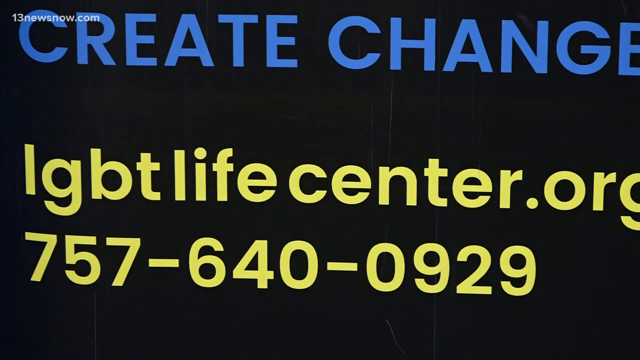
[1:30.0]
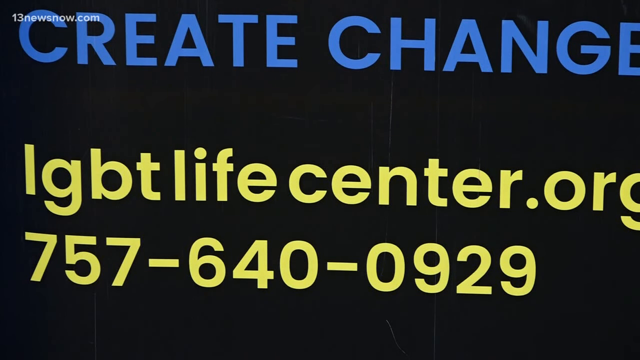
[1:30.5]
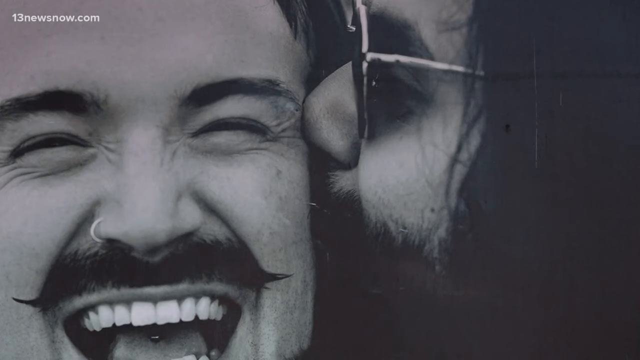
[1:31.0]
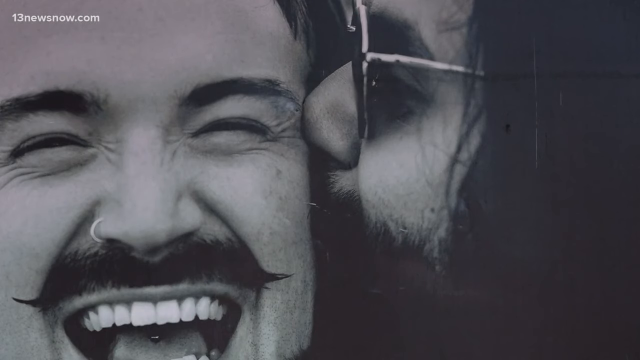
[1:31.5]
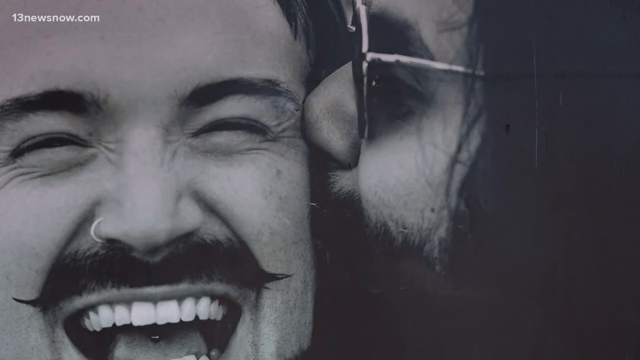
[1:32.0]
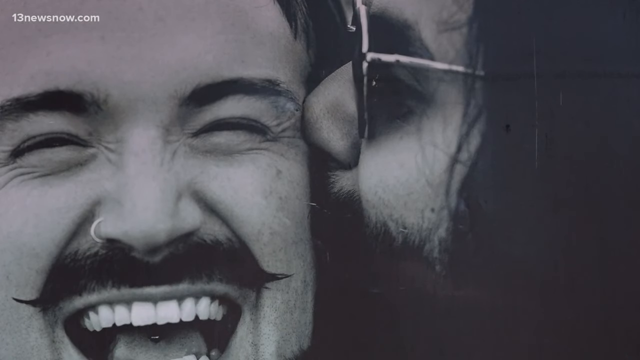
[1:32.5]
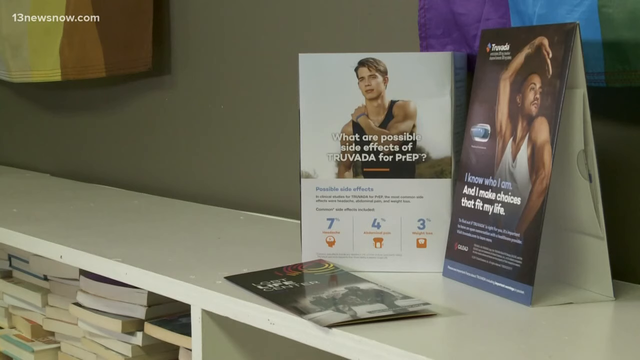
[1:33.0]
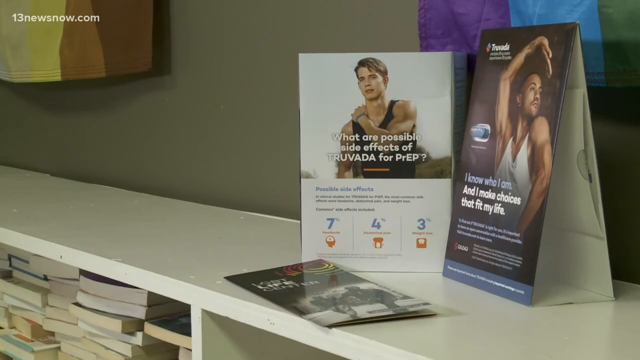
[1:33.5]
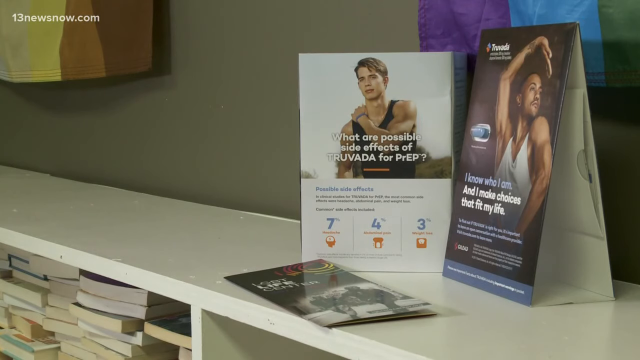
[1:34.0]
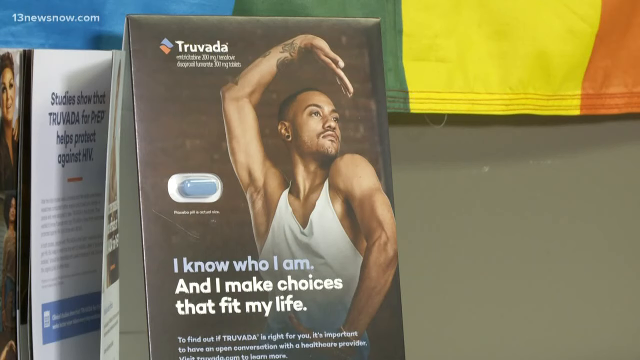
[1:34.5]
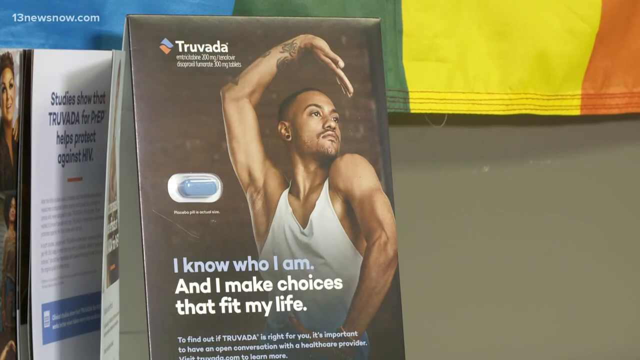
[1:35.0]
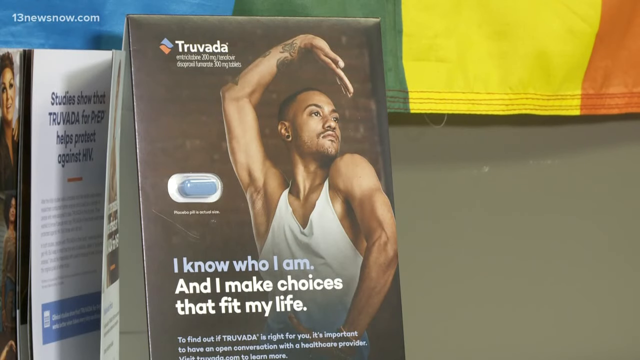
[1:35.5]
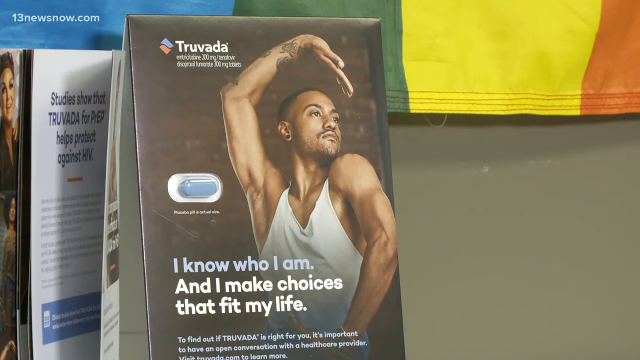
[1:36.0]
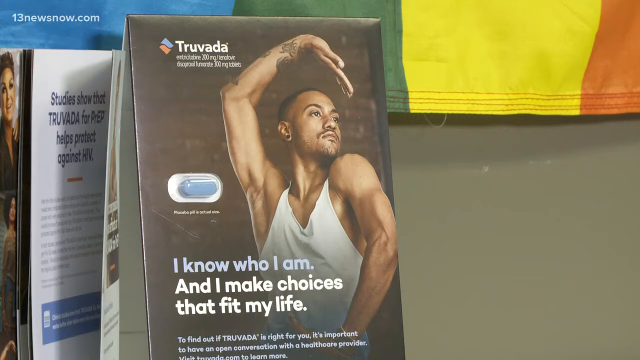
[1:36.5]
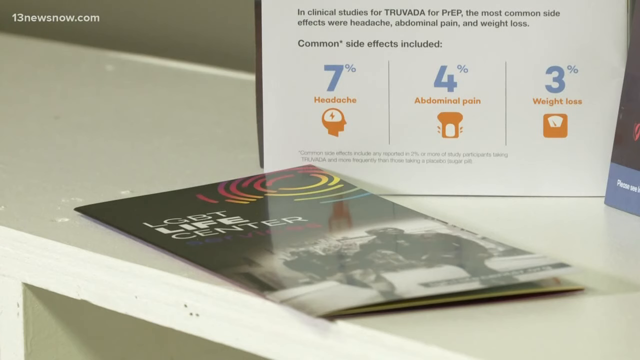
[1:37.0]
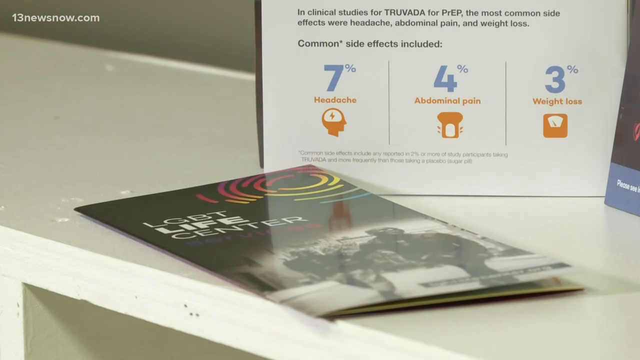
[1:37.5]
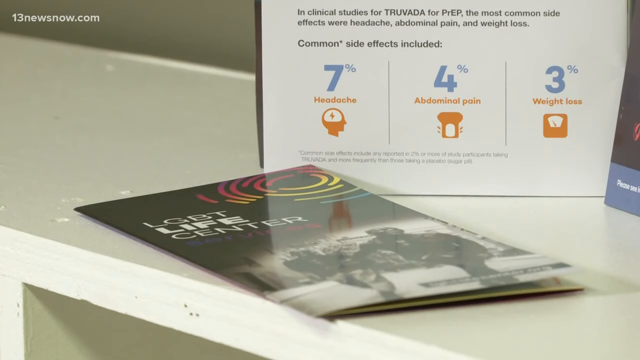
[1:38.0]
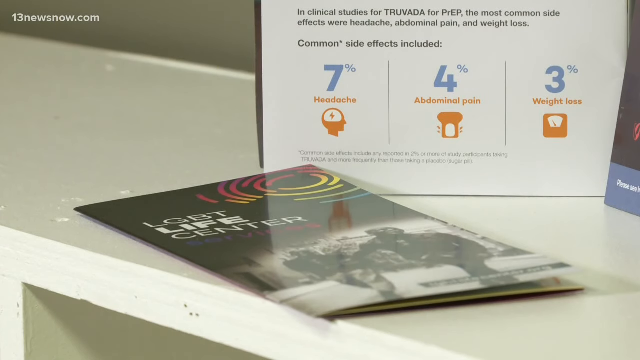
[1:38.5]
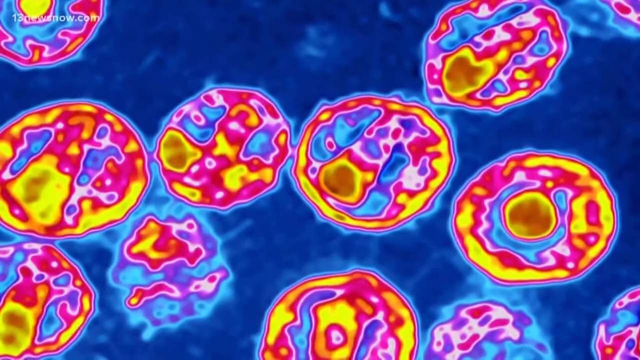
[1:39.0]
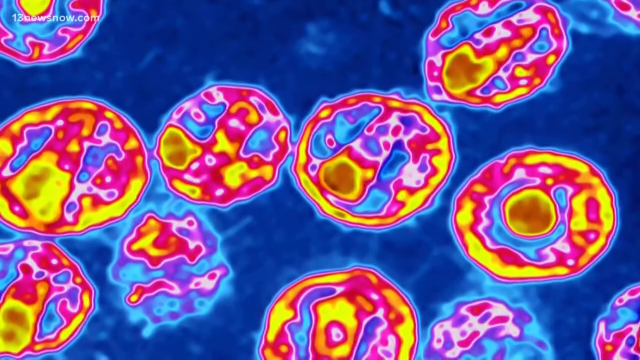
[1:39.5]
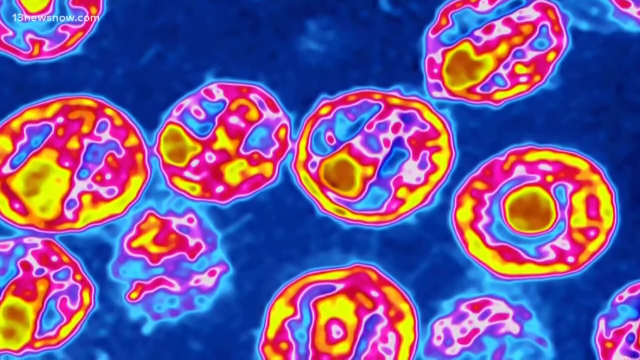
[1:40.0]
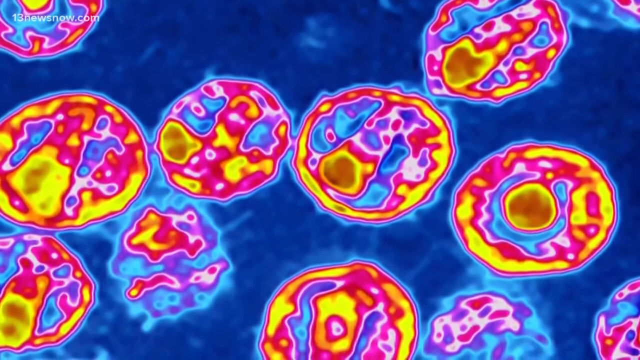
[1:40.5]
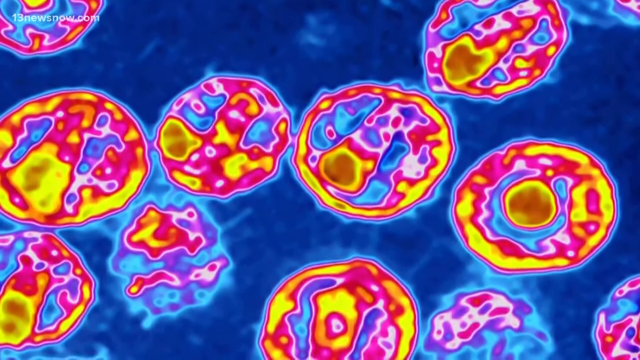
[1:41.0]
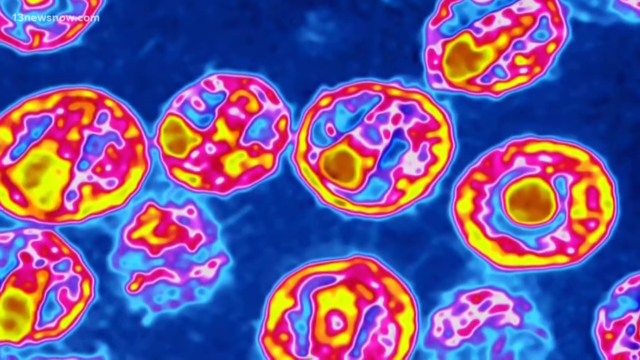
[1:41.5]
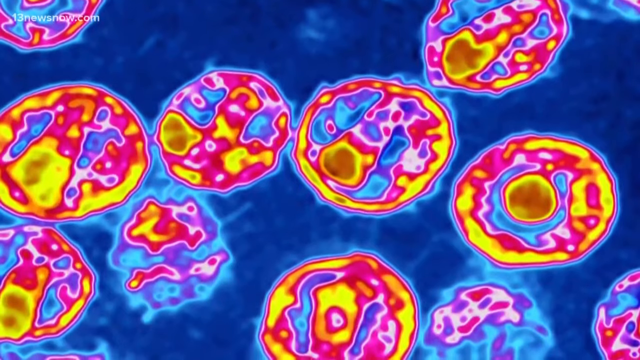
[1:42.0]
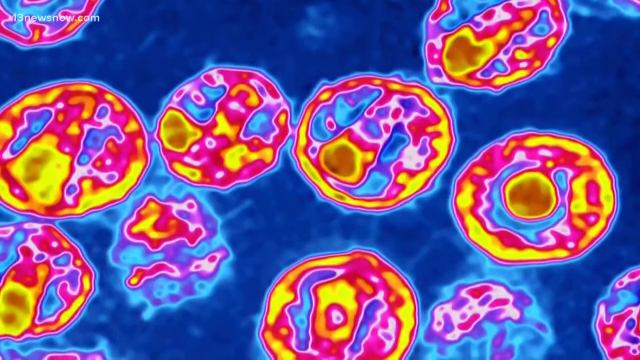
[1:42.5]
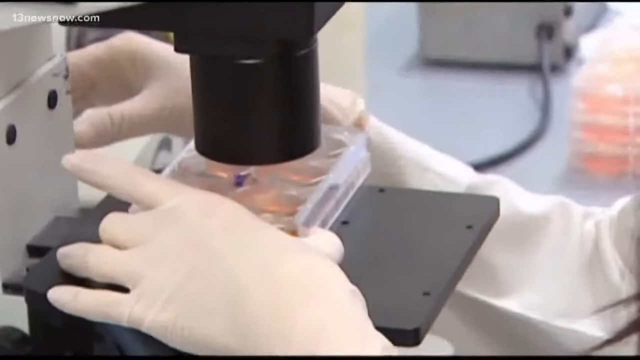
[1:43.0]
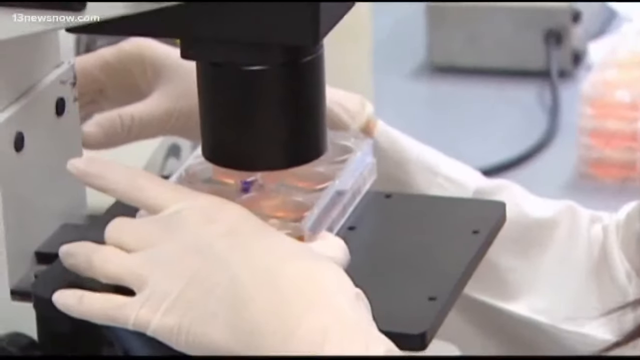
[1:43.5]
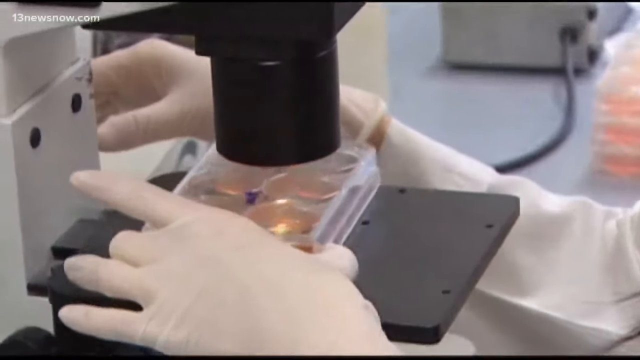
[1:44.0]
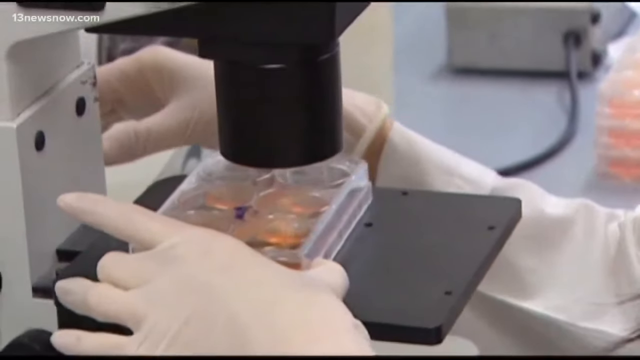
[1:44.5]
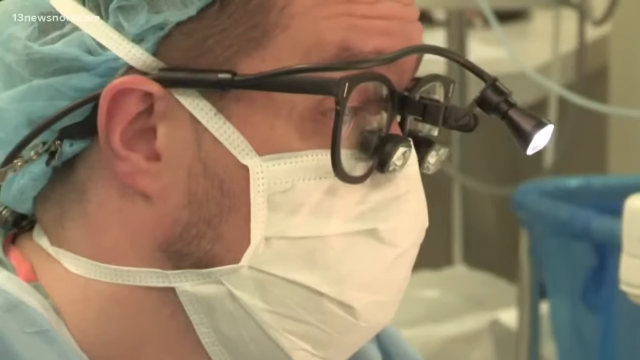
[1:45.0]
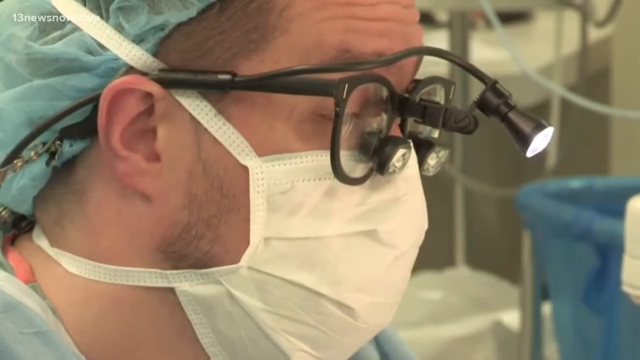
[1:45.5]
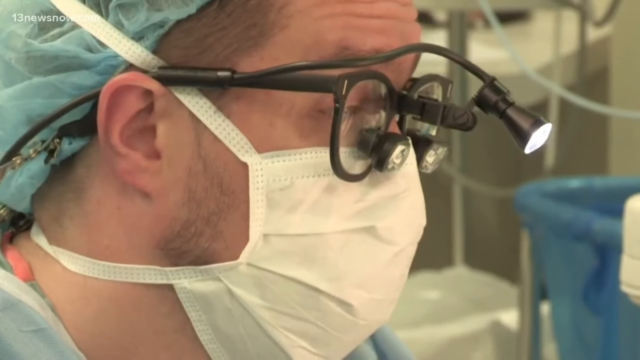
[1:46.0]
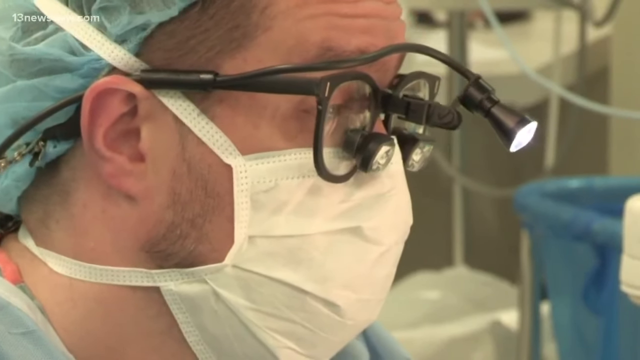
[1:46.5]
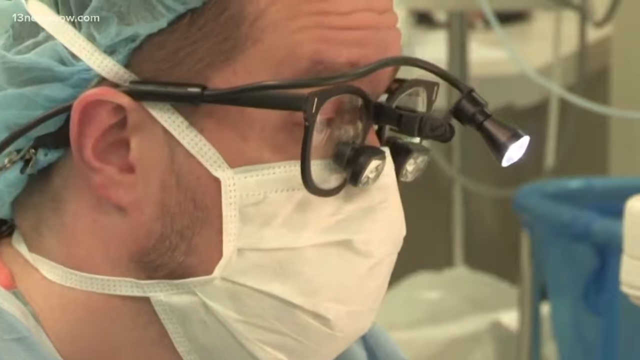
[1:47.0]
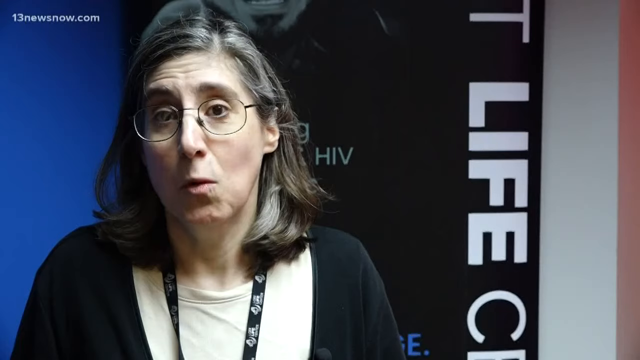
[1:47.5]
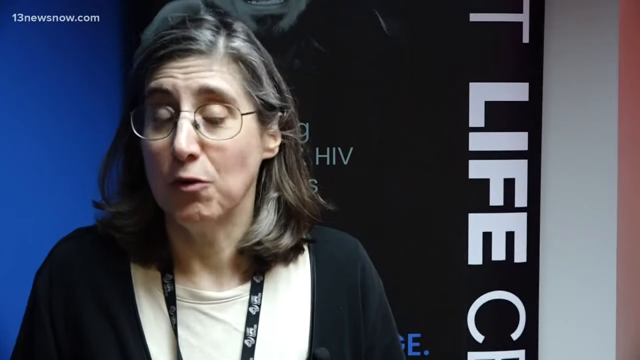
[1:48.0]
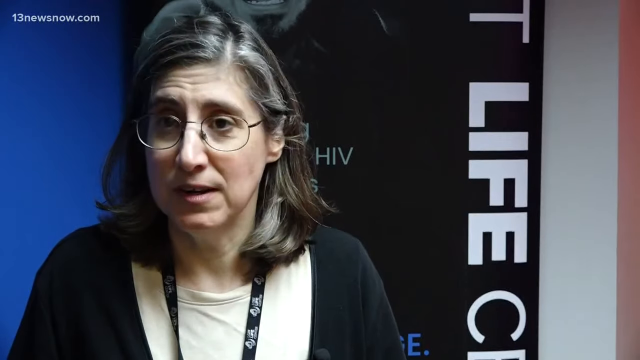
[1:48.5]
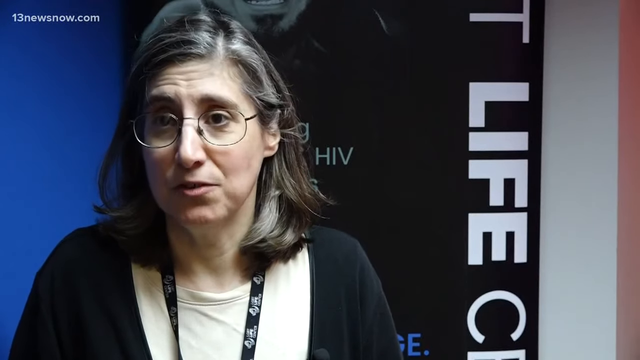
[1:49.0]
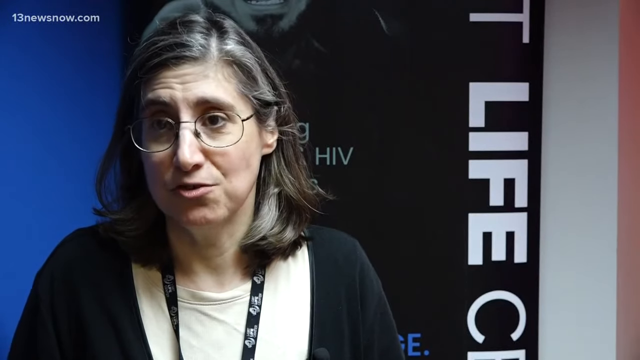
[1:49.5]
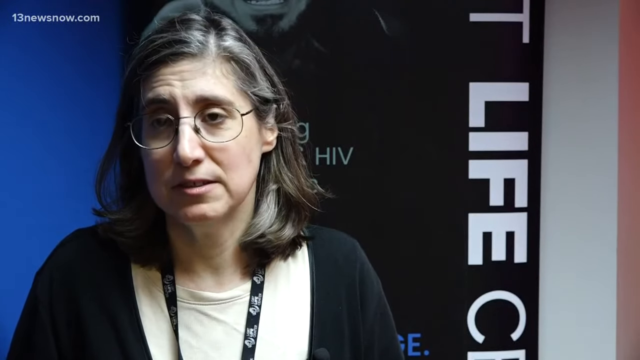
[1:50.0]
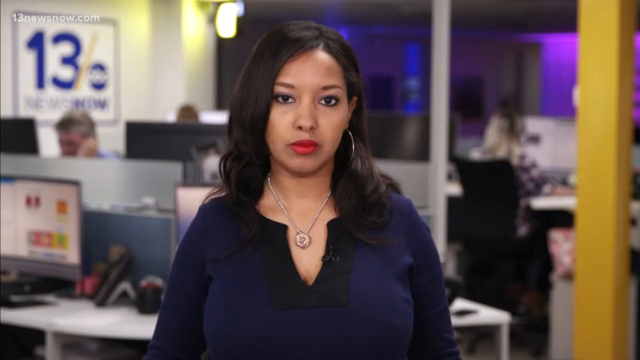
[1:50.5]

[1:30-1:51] The sign with the website and phone number is briefly visible. The video then cuts to a very close-up black-and-white picture of what looks like a man kissing another man on the cheek. Both have mustaches and beards; the man doing the kissing wears glasses, and only the side of his face is visible. Next is a medical clinic, where a counter has a couple of standing brochures, both showing a male on an advertisement for some medication. A close-up shows one that is for Truvada. Then the countertop is shown with what appears to be a folder lying down, which says it is from the LGBT Life Center. The video cuts to footage of cells under a microscope against a bright blue background. The cells are round and zoomed in so they look quite large, and there are just under a dozen on screen. They glow blue with orange and pink shadows around them, each with different amounts of pink and orange, and some have something almost like a nucleus that is mostly yellow. The video then cuts to a lab with technicians looking at different specimens under microscopes, then back to the woman talking to the reporter, and then to the ABC studio reporter.